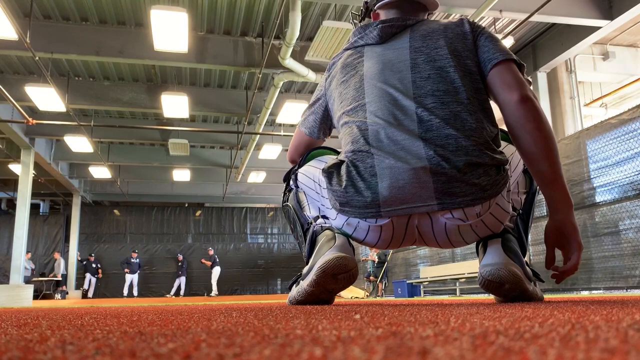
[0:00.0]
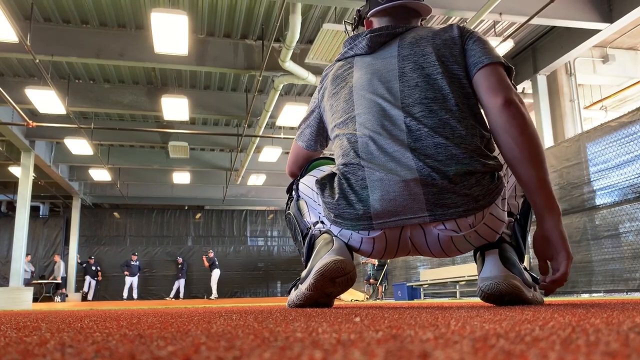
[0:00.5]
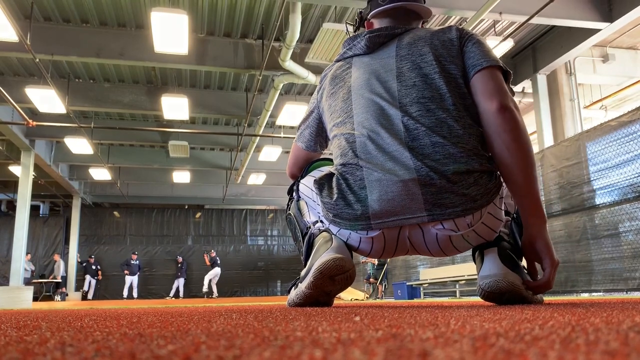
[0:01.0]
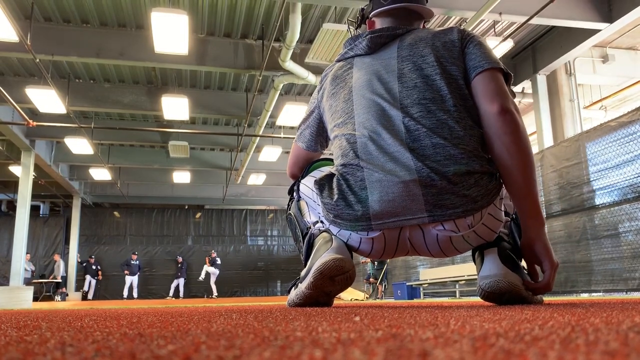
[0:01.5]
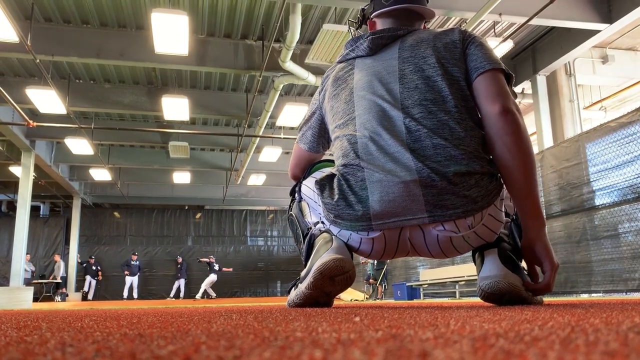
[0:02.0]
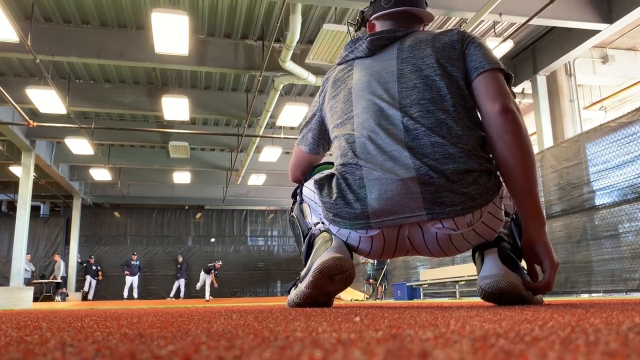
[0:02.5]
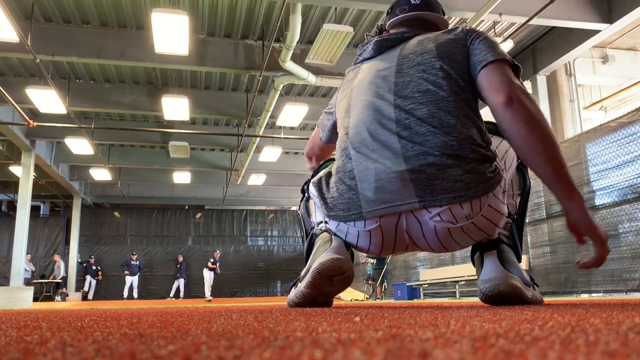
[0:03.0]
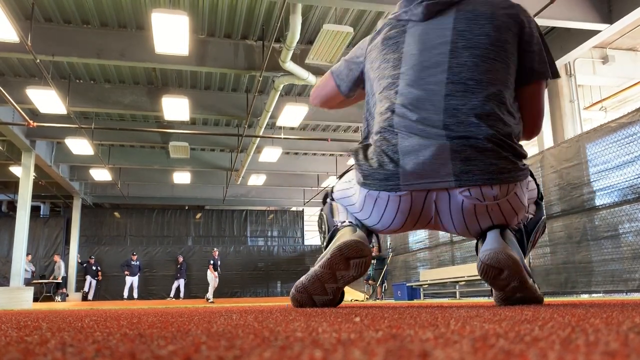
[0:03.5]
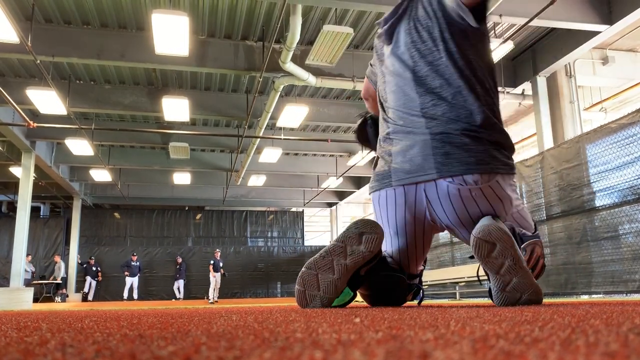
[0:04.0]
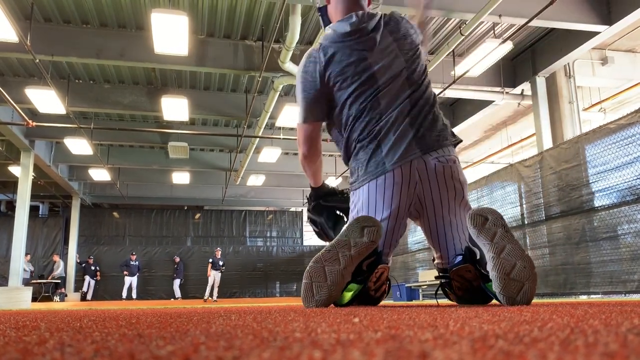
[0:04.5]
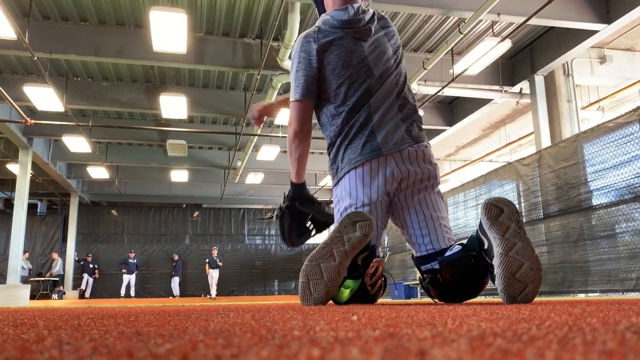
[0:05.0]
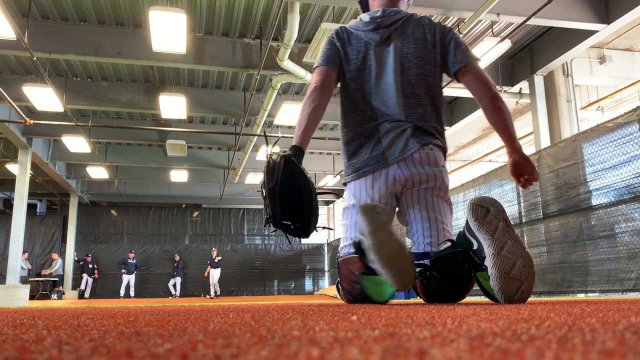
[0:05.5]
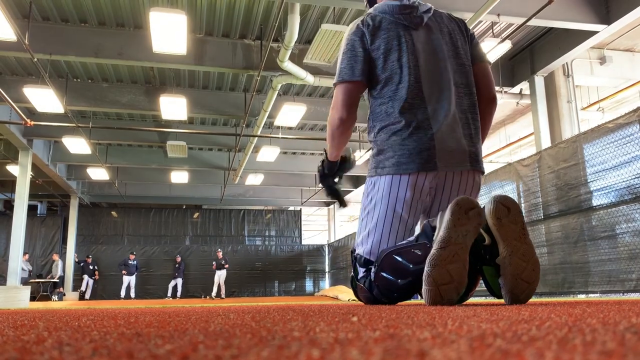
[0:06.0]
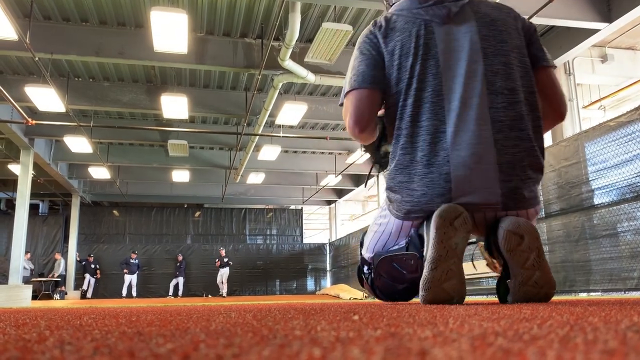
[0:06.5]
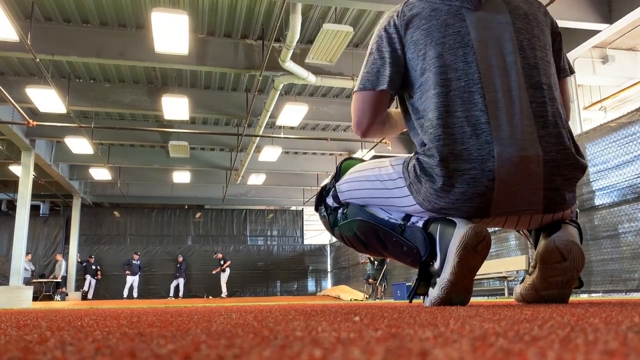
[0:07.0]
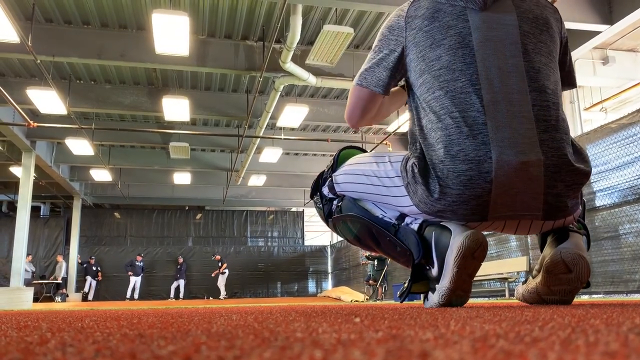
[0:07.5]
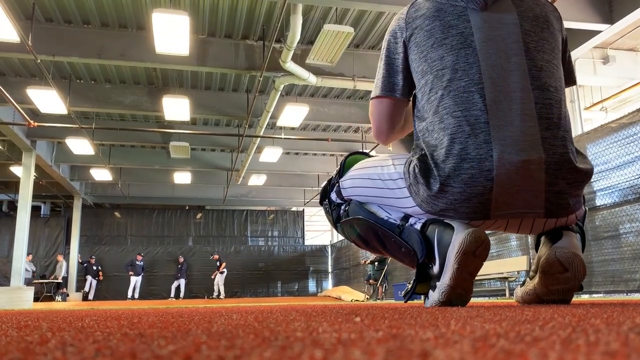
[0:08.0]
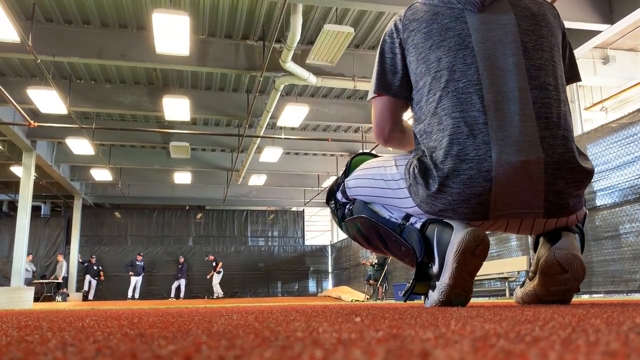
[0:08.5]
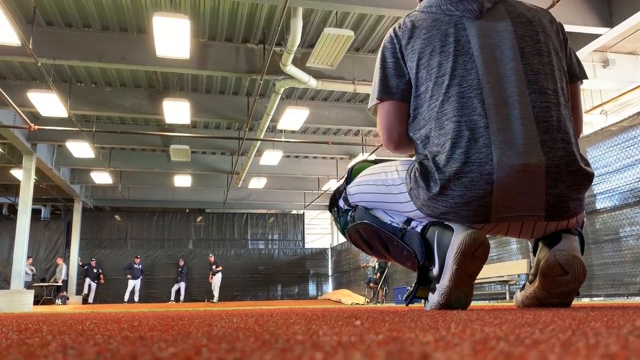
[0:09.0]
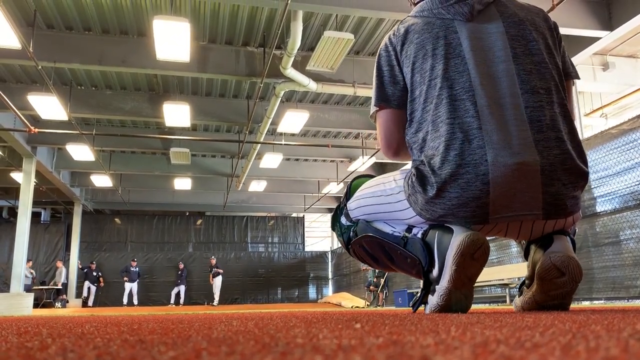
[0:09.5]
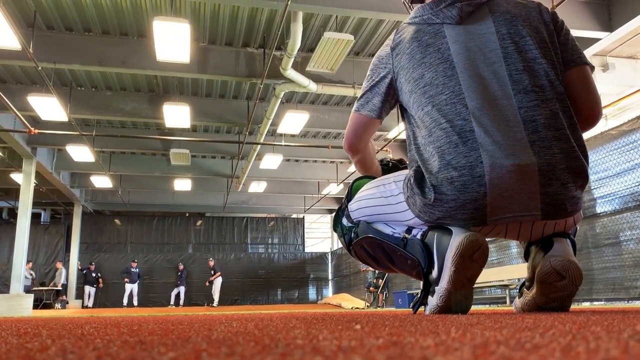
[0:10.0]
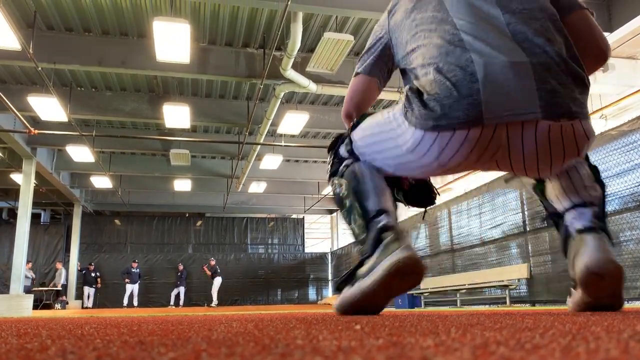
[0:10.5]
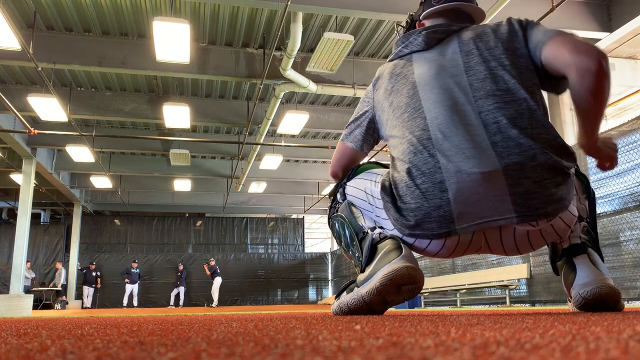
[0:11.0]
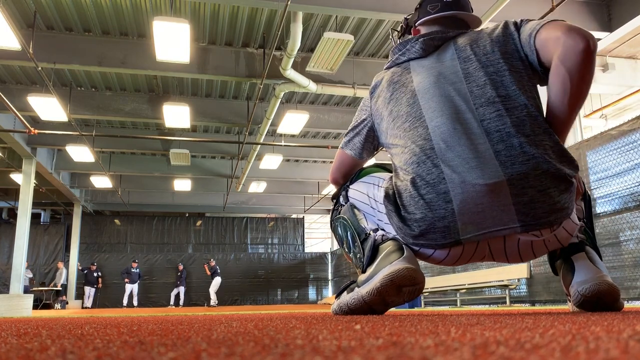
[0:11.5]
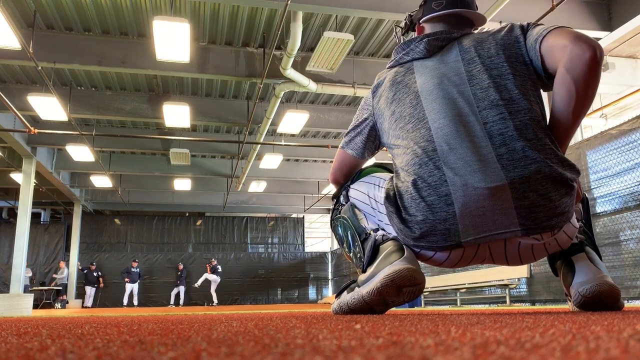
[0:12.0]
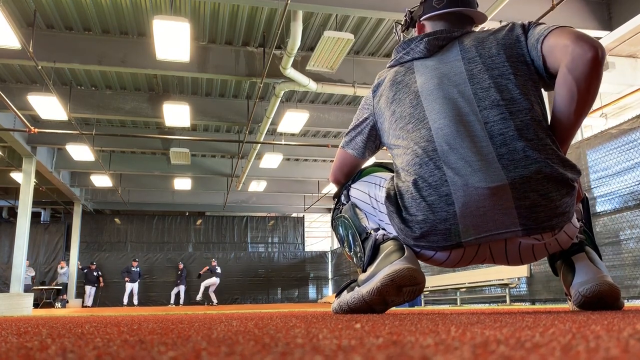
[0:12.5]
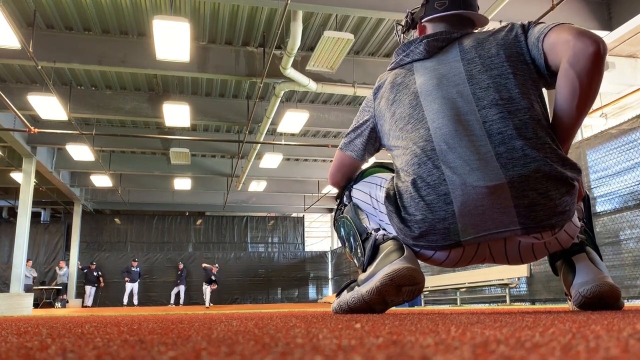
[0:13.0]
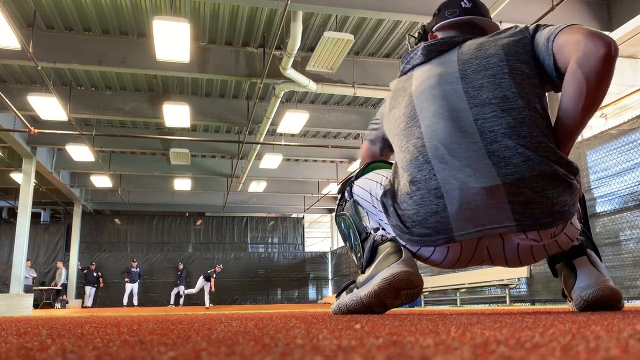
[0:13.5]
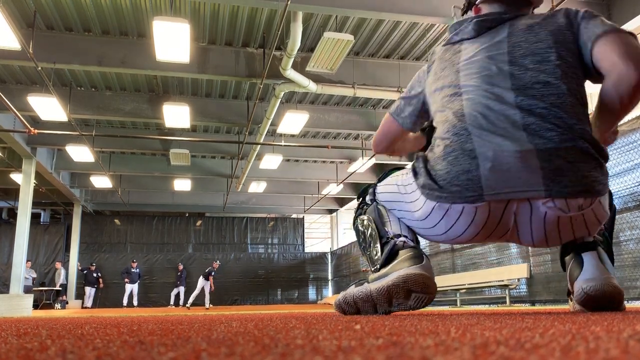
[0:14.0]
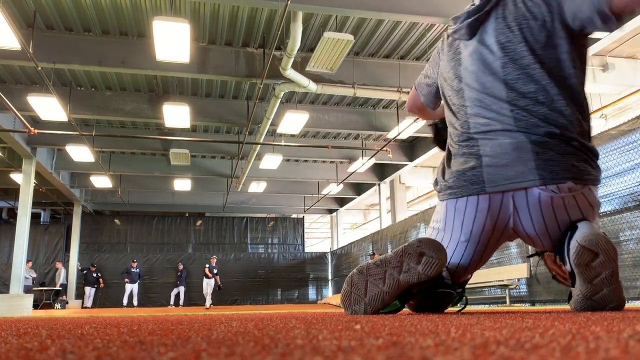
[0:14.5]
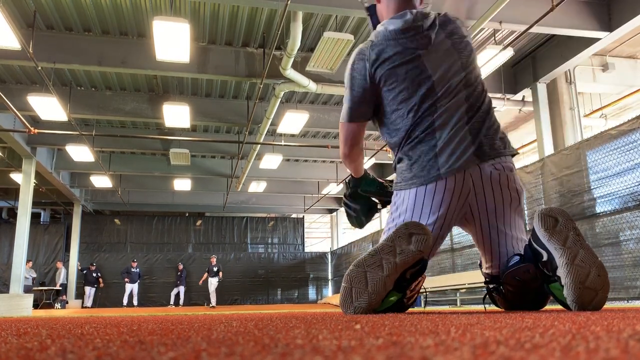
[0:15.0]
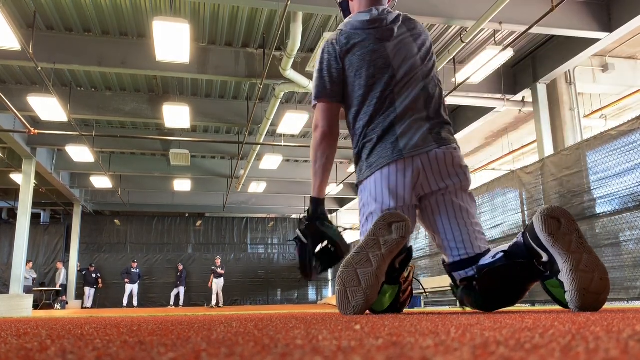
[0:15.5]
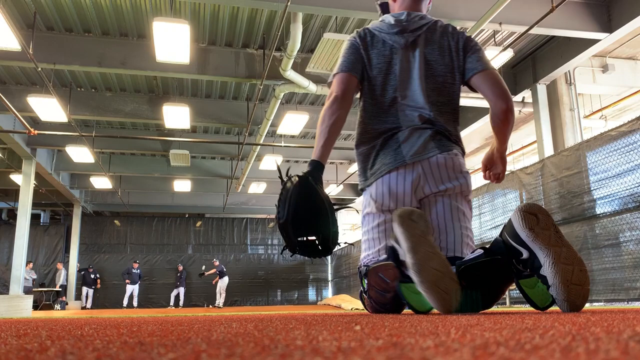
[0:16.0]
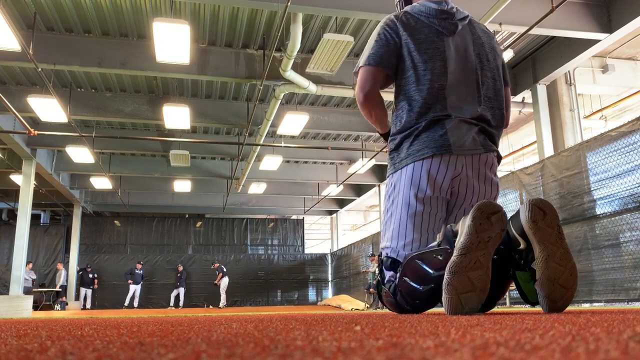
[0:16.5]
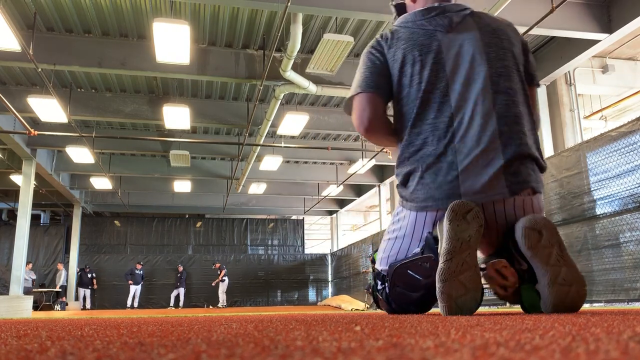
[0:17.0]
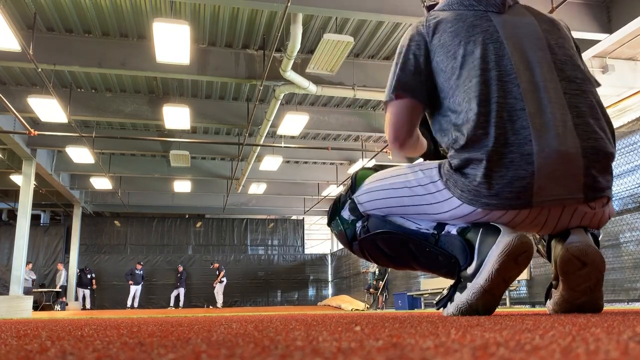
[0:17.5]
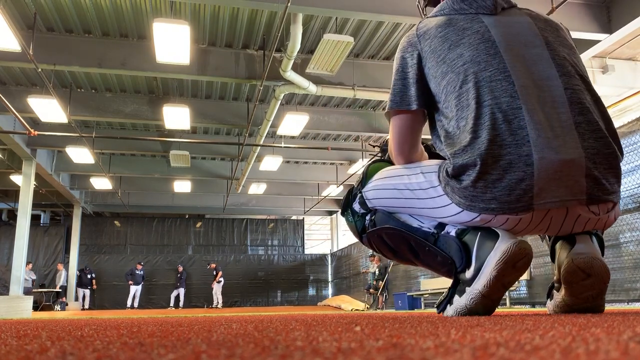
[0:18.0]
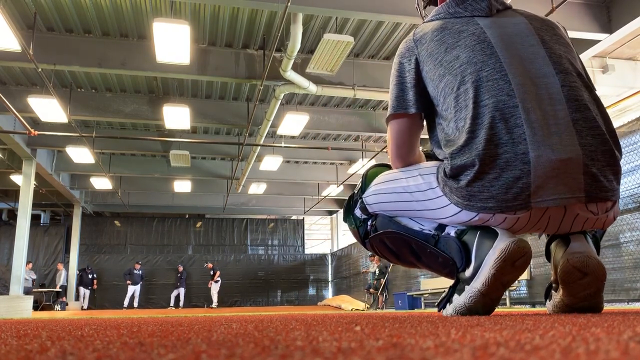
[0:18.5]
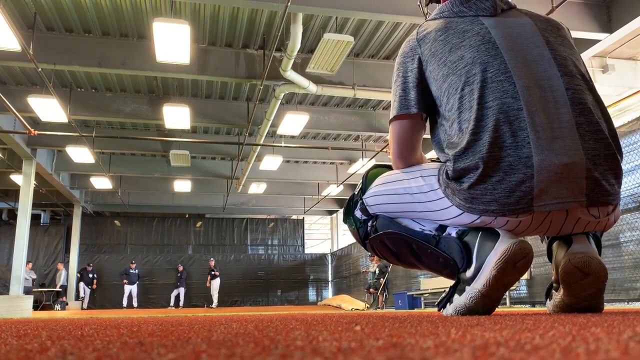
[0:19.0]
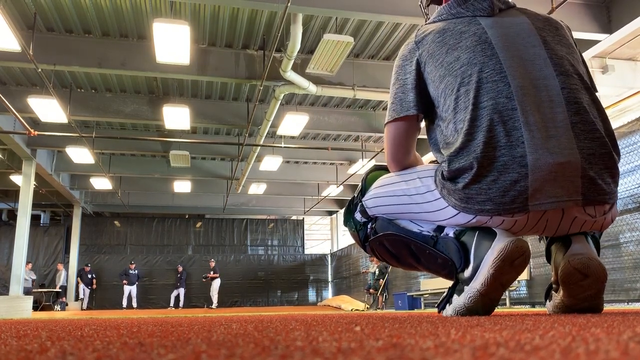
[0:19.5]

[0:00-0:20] Inside a facility, a group of baseball players is gathered. The camera is positioned behind the catcher, who is crouched in his catching position and receives balls pitched from the other end of the room. The catcher wears typical catching gear, including knee pads and chin guards, and appears to have a mask, though only his back is visible. At the far end, the pitcher throws the ball to him, practicing his pitching. Right next to the pitcher are five other people; many of them are in uniform, while two do not appear to be, and they are standing next to the pitcher.